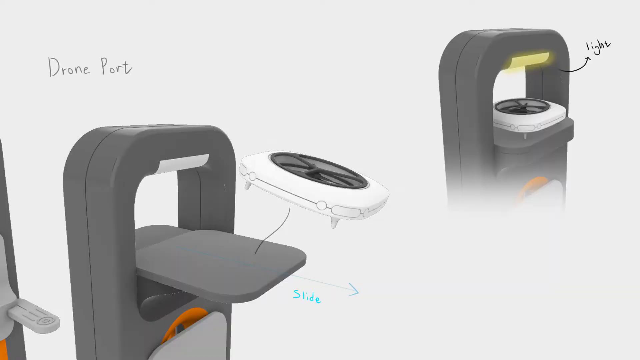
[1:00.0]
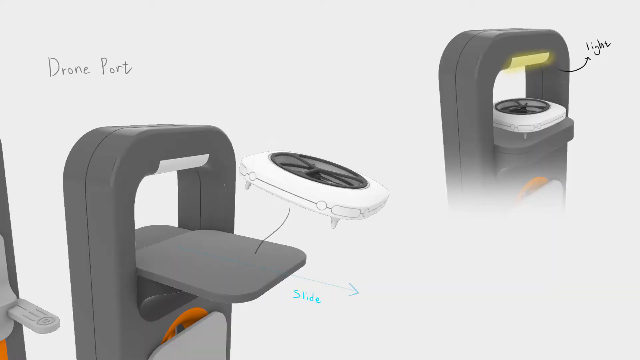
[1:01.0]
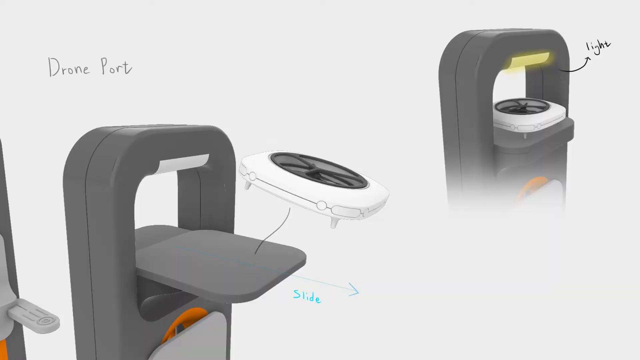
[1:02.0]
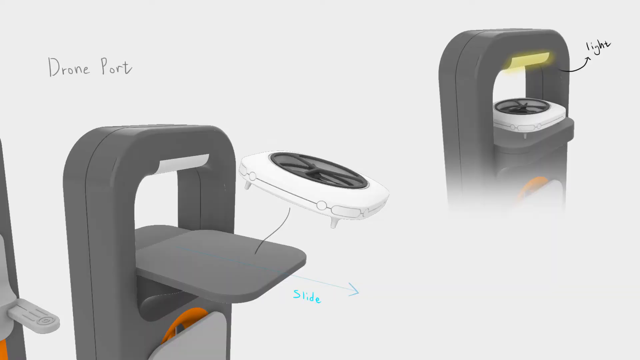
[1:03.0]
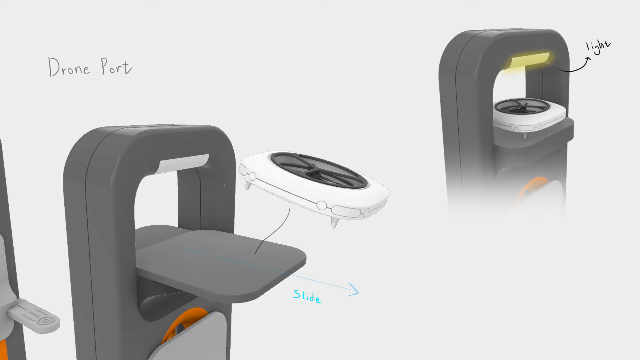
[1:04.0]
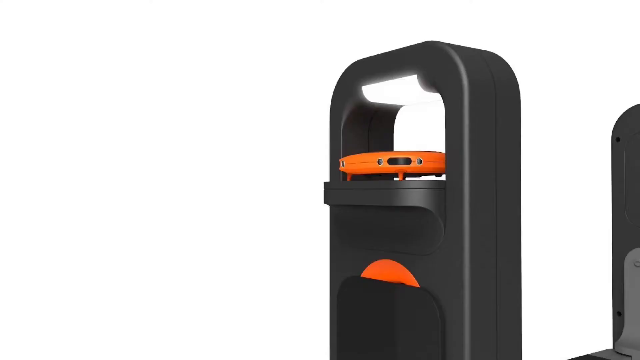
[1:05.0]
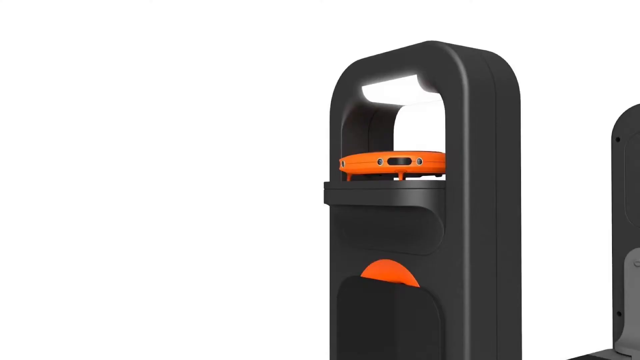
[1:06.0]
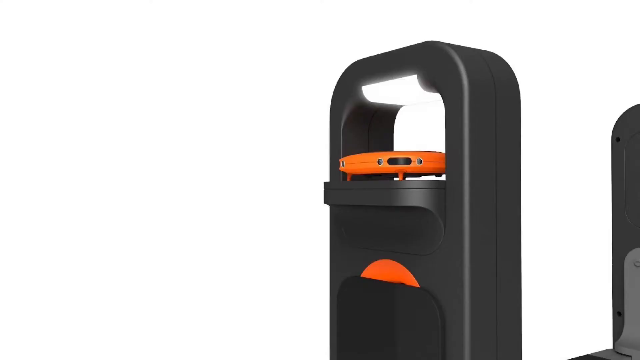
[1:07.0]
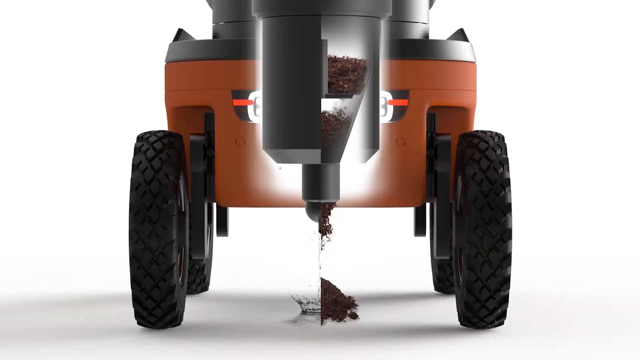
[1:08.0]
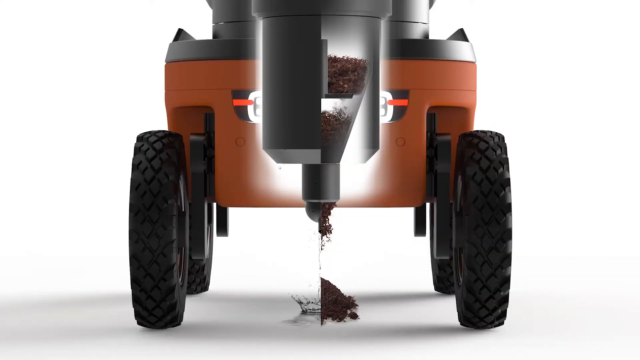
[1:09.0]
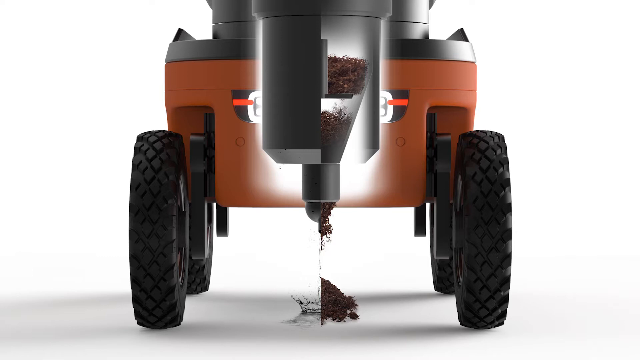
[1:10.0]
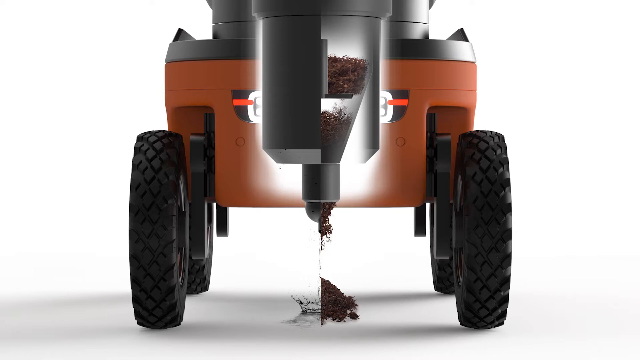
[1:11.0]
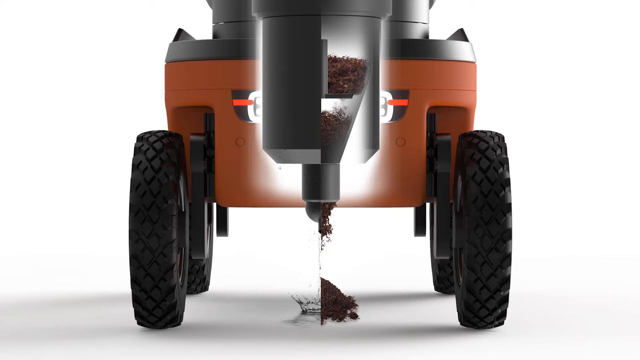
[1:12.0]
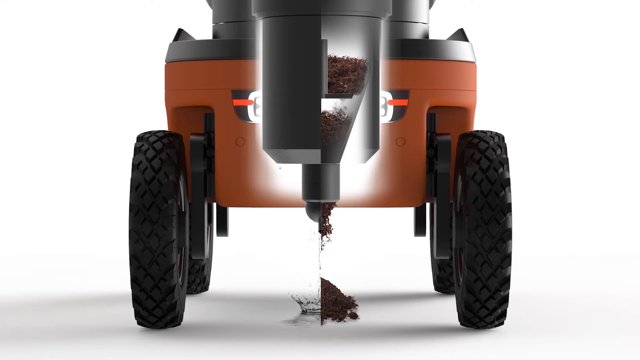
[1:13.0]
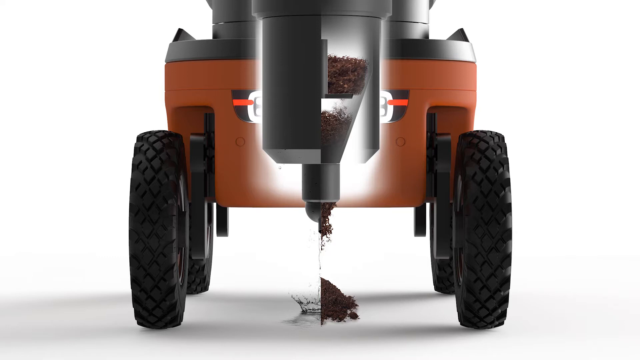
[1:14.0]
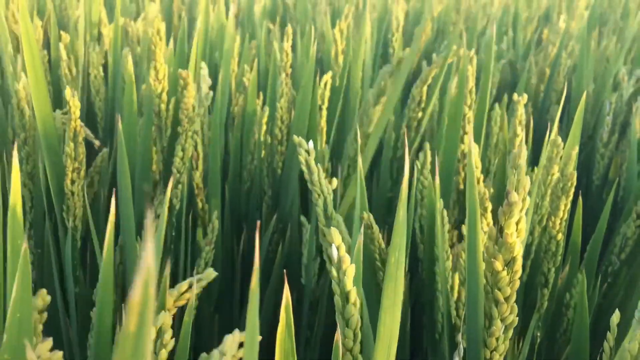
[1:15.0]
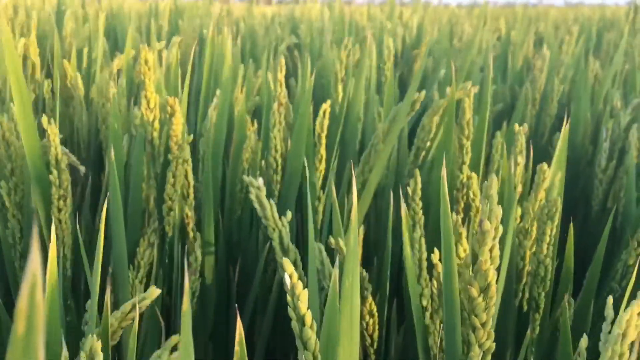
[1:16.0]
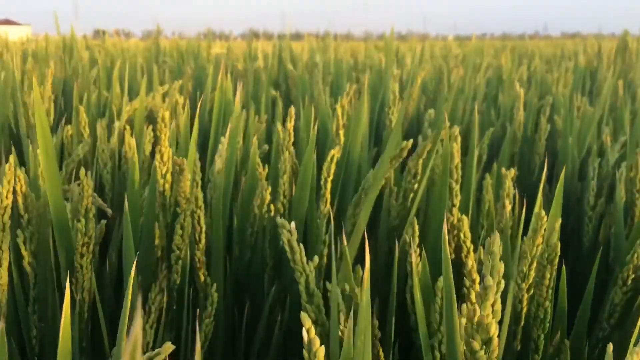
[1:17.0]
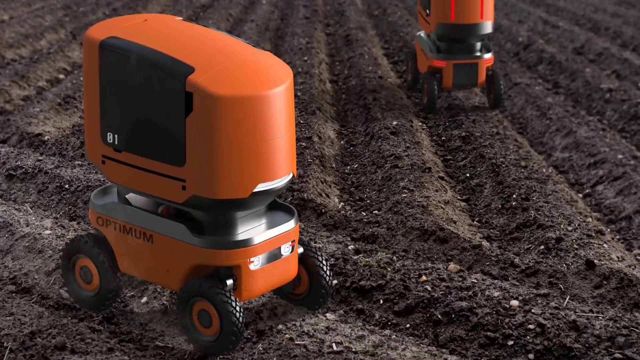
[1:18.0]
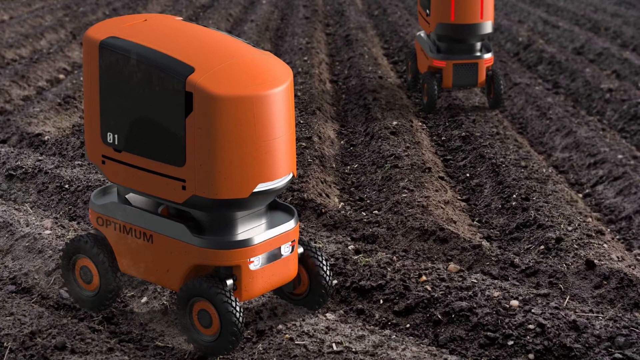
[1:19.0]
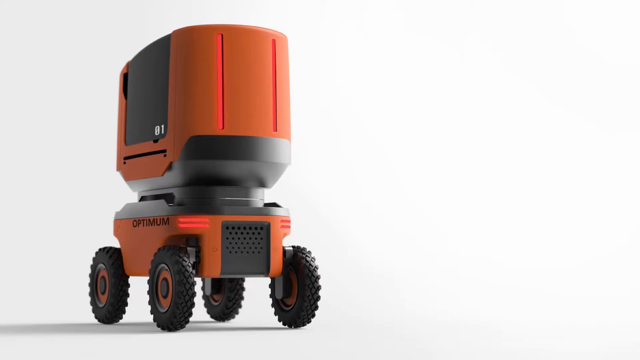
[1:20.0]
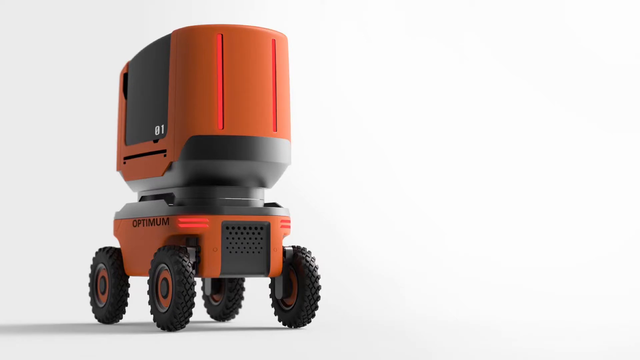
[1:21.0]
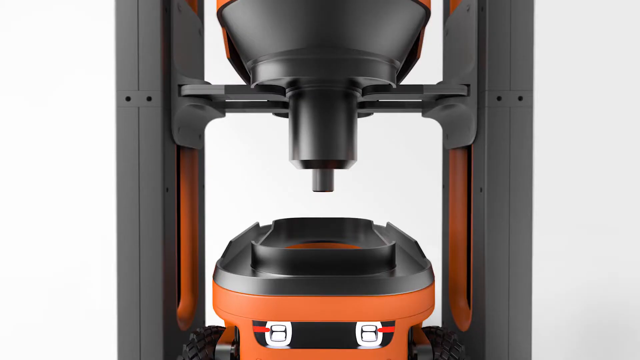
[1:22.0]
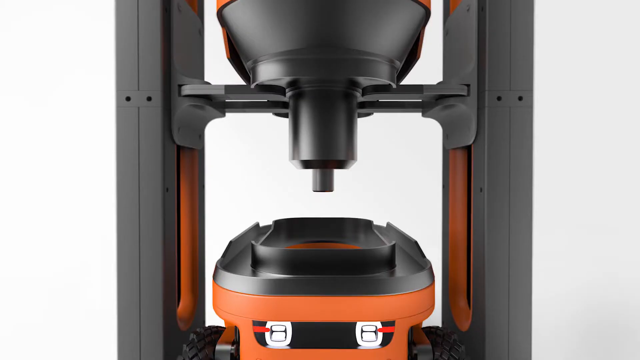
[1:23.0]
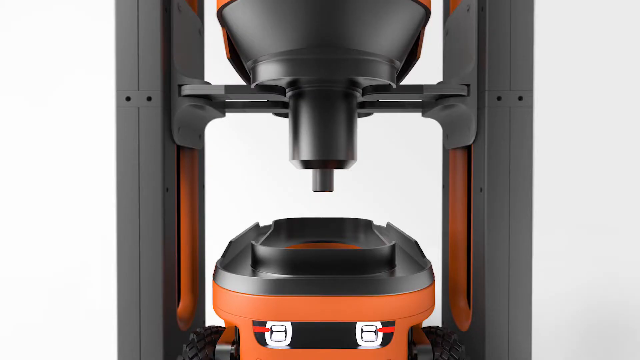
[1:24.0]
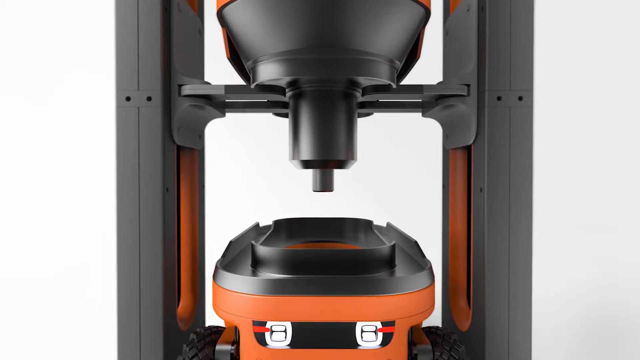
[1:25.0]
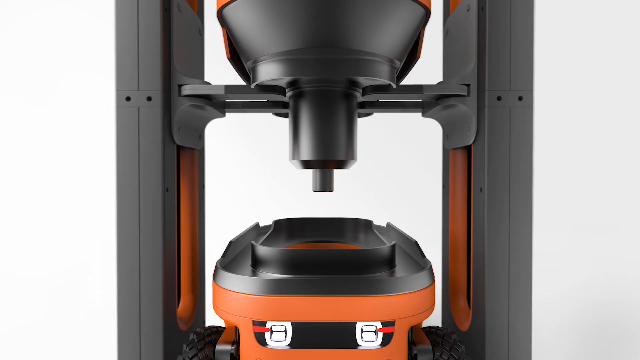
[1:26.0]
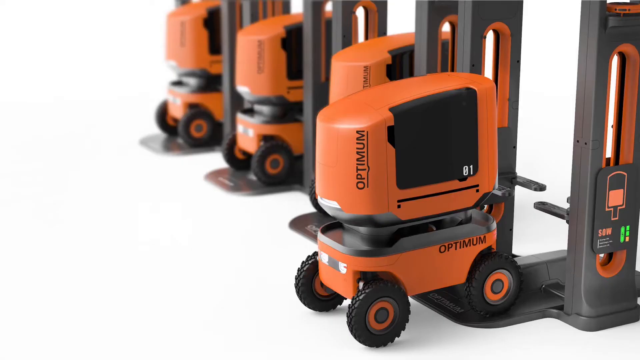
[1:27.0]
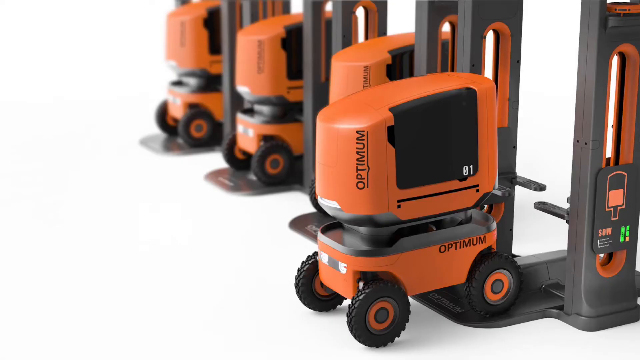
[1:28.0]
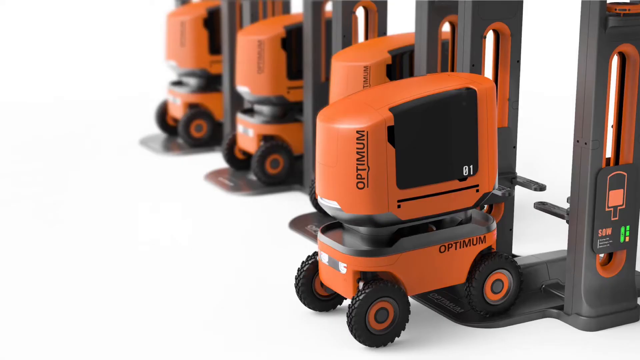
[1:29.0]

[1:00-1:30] Mechanical devices appear, including a black drone port from which an orange drone floats away. The video cuts to another device that appears to churn brown dirt material inside its chamber and then dump it on the ground; this orange device has black wheels, and the graphic drawing has an all-white background with a gray floor beneath the orange machine. Next comes a close-up of bright green and yellow long blades of grass flowing in the wind. Another cut shows these orange devices up close, working on brown dirt ground and sitting in their charging stations. In the charging-station image, three or four charging stations are shown, each with an orange machine in it; the machines have "optimum" in black text on their sides and black wheels.